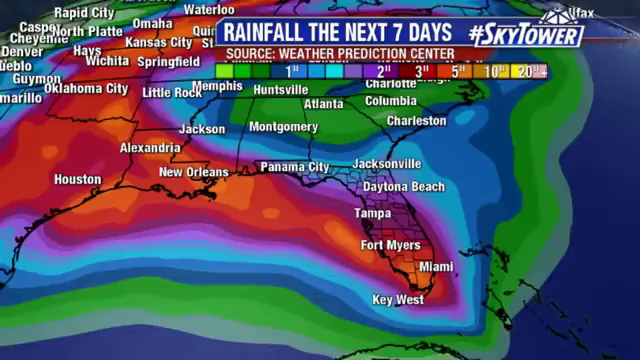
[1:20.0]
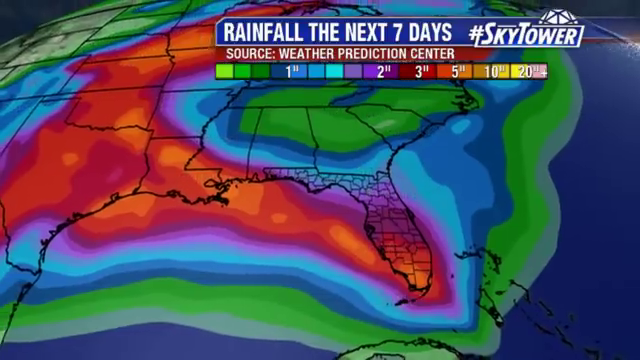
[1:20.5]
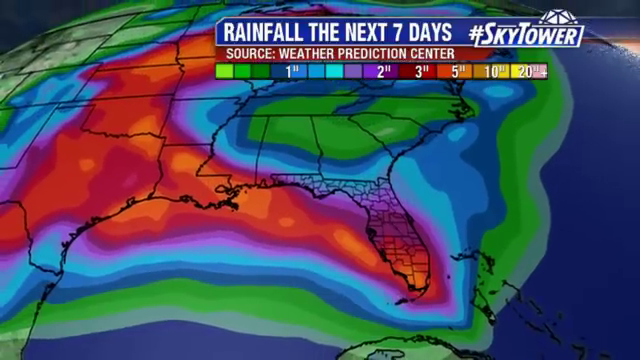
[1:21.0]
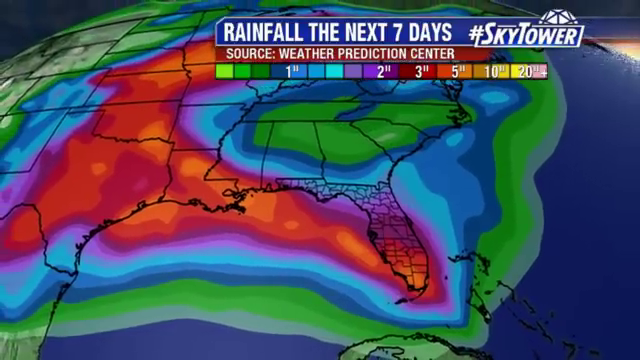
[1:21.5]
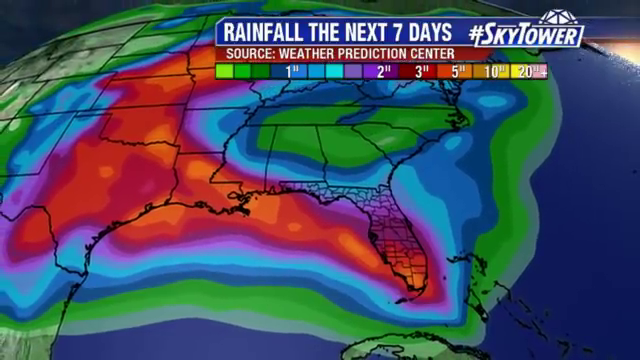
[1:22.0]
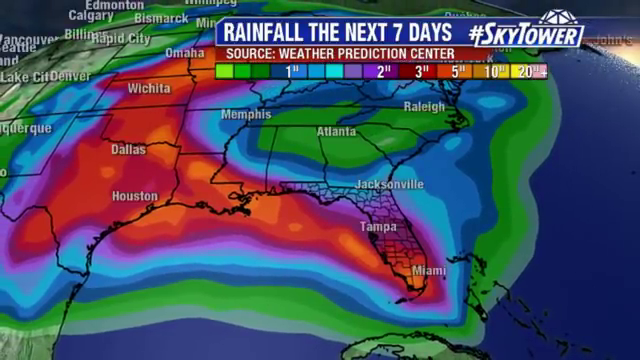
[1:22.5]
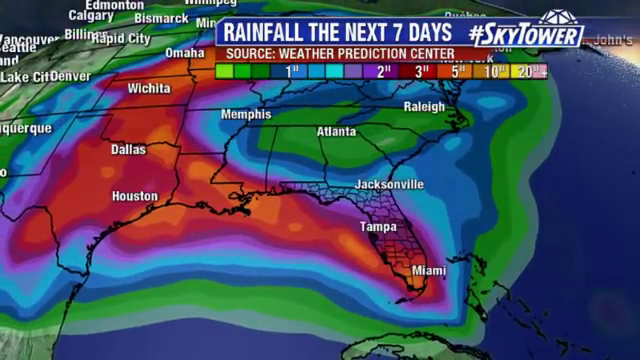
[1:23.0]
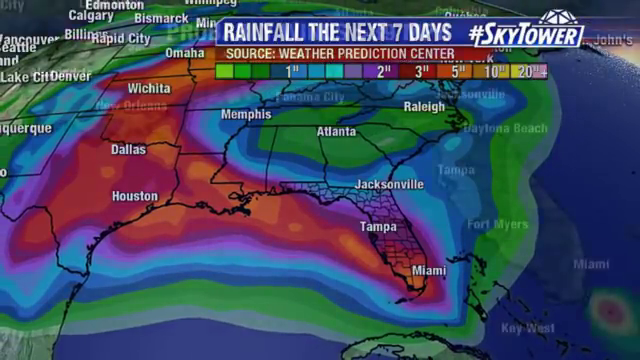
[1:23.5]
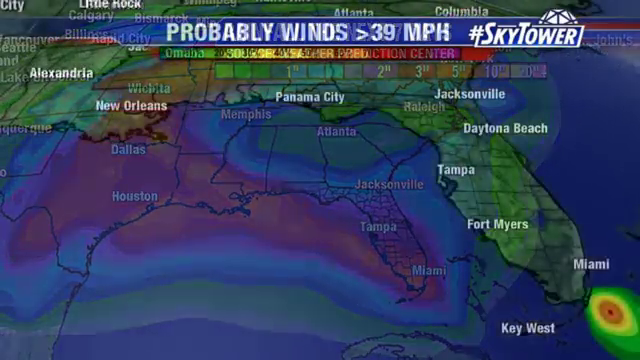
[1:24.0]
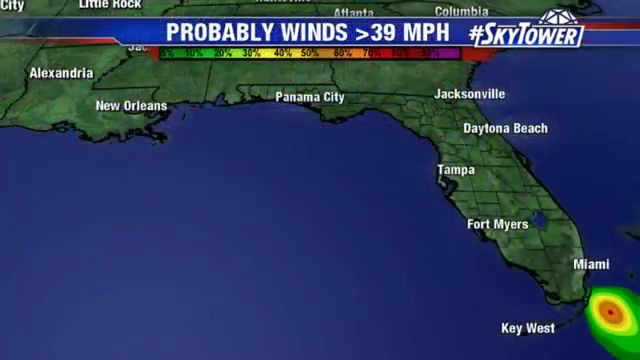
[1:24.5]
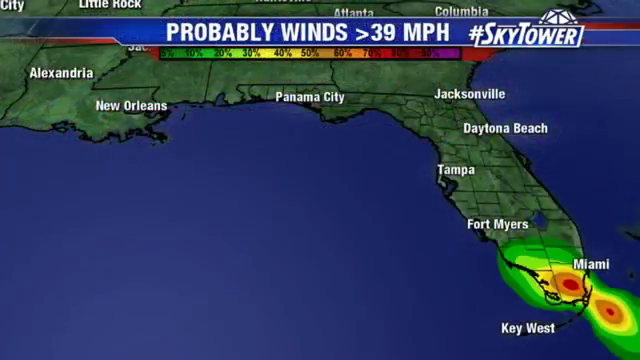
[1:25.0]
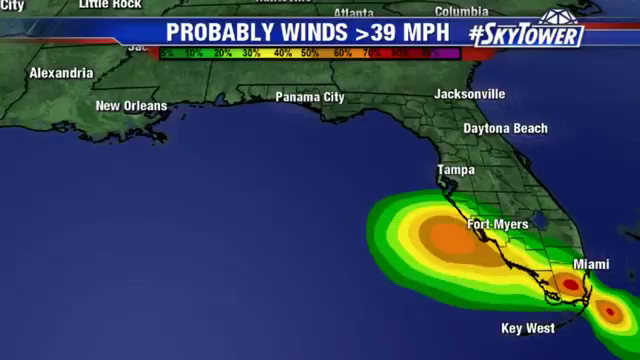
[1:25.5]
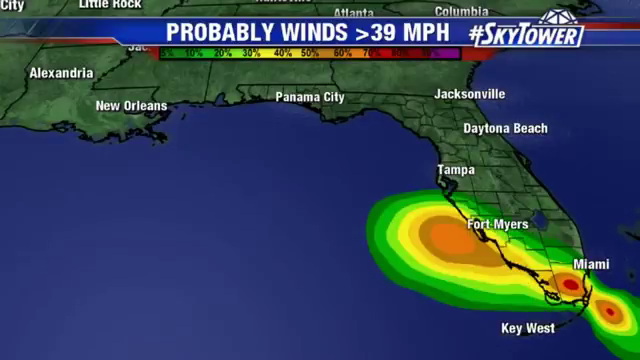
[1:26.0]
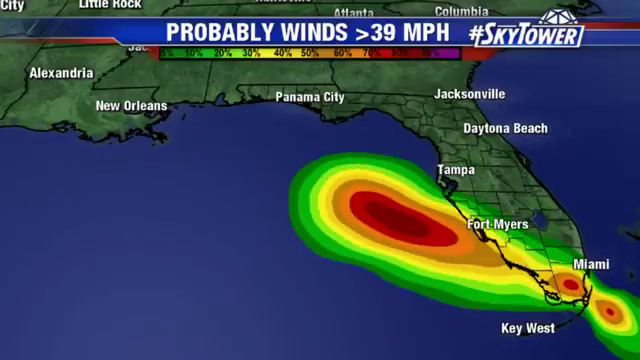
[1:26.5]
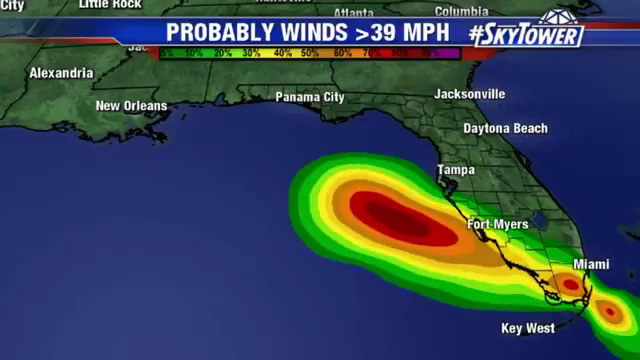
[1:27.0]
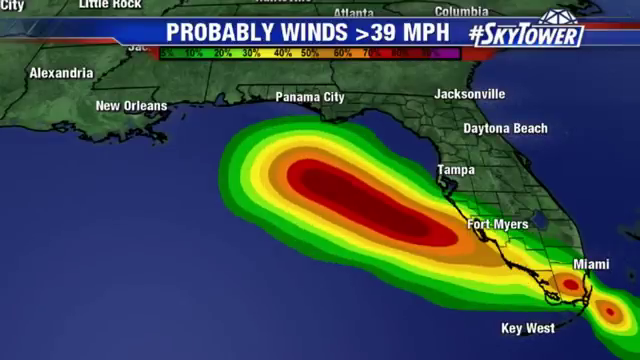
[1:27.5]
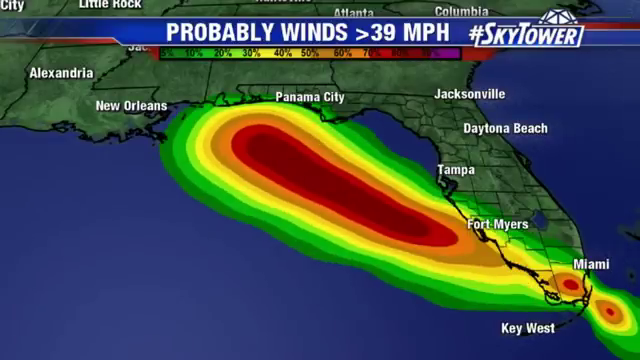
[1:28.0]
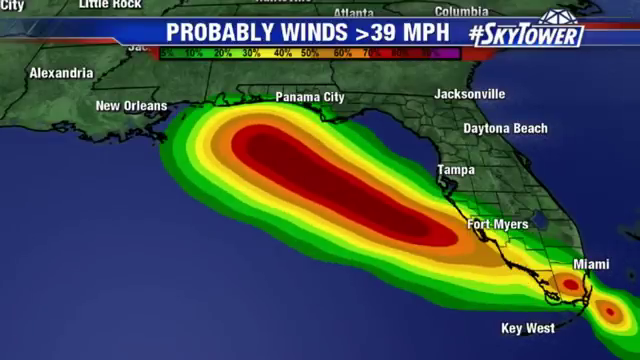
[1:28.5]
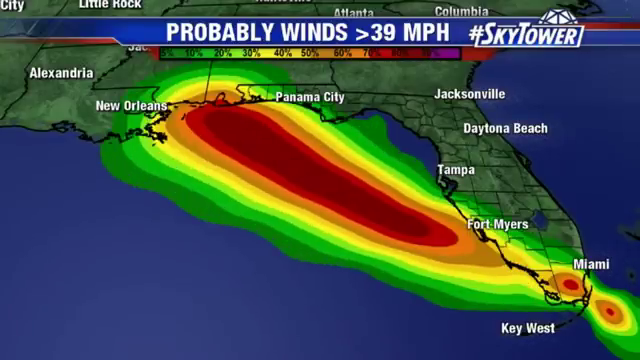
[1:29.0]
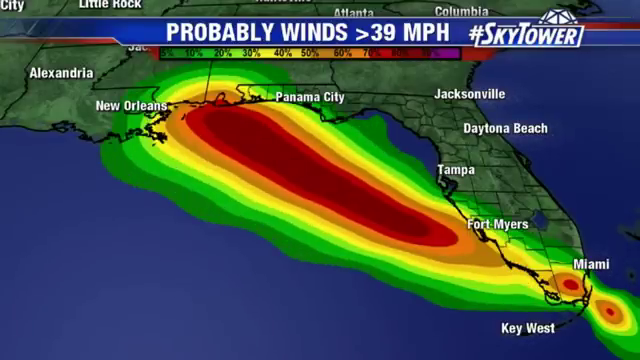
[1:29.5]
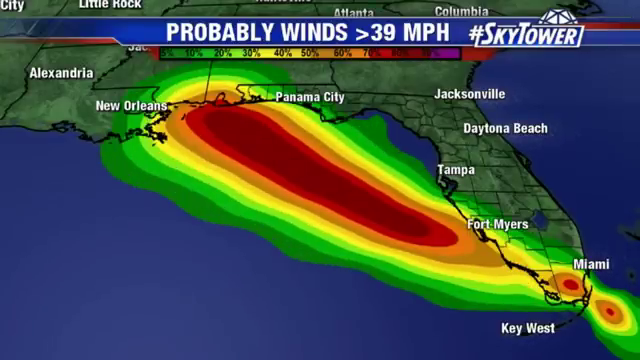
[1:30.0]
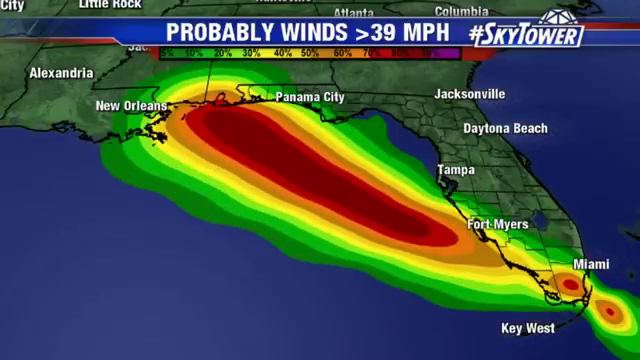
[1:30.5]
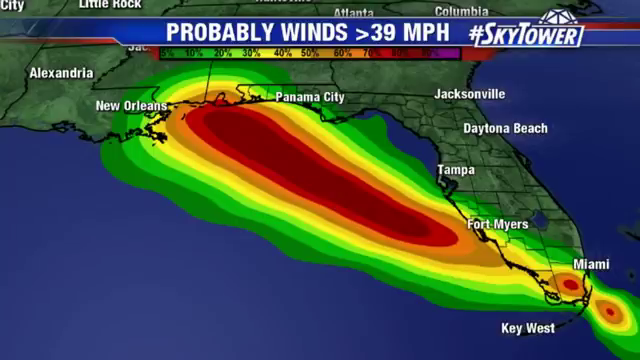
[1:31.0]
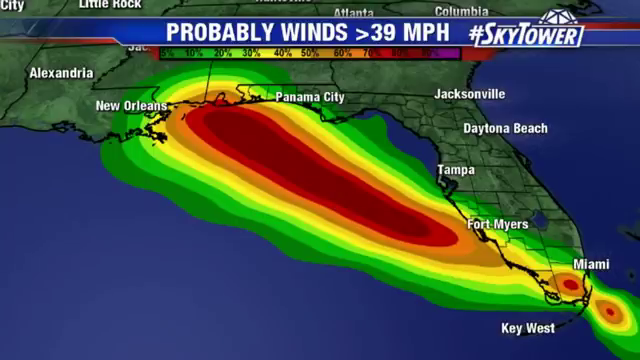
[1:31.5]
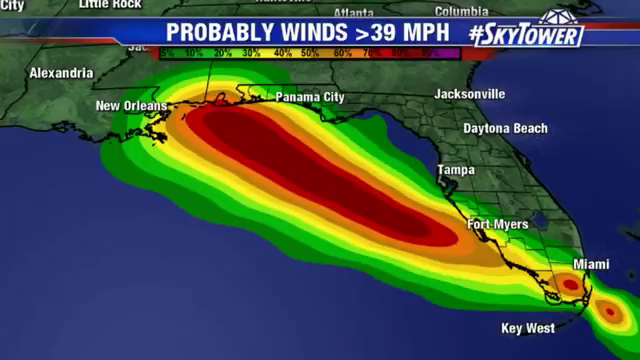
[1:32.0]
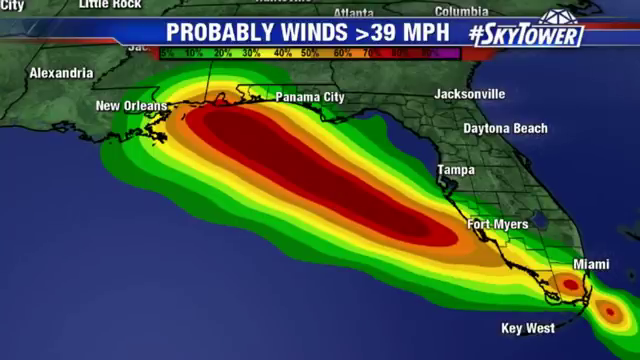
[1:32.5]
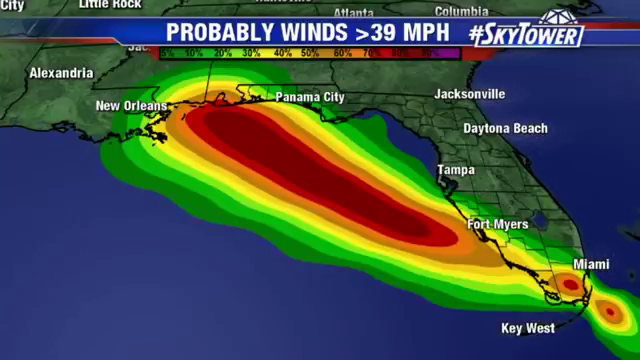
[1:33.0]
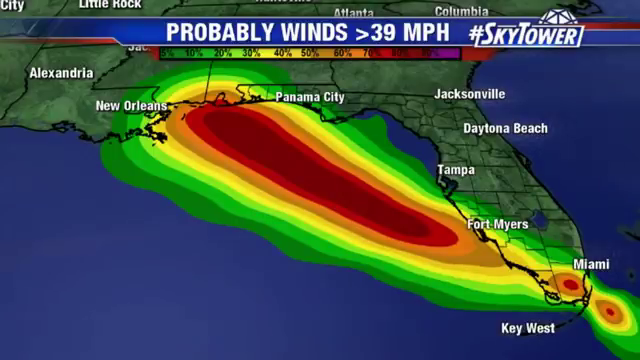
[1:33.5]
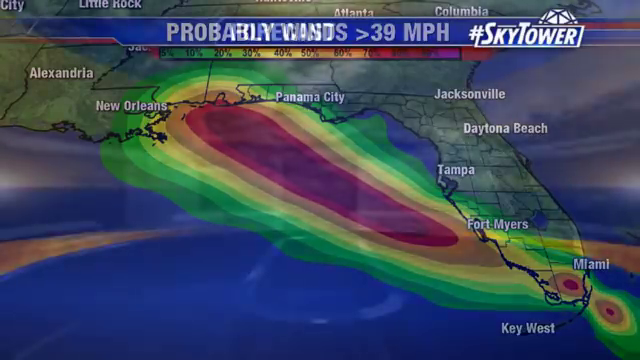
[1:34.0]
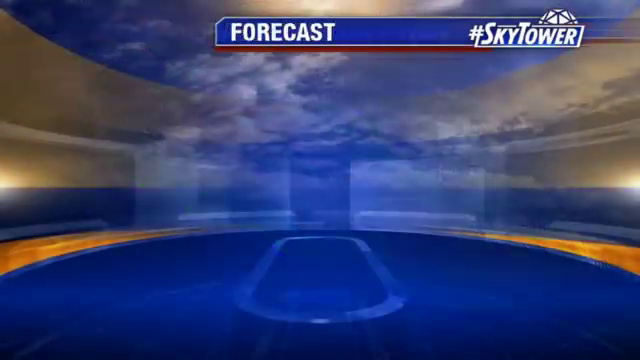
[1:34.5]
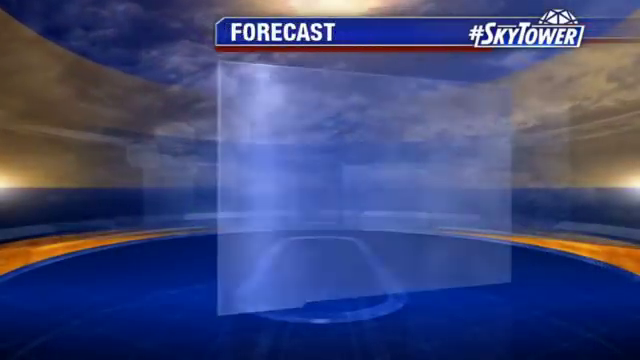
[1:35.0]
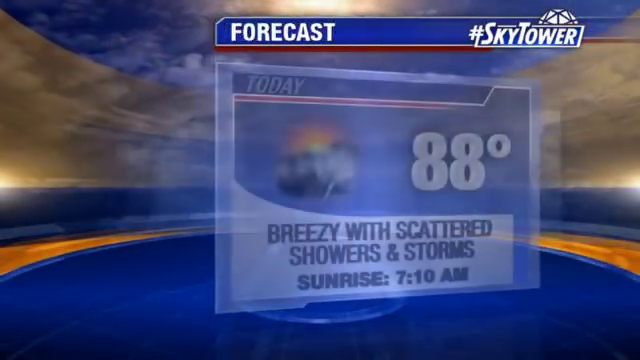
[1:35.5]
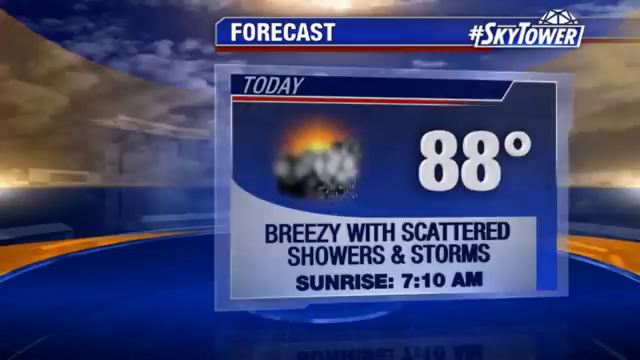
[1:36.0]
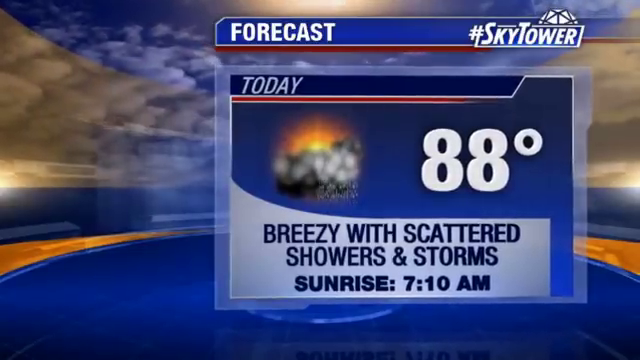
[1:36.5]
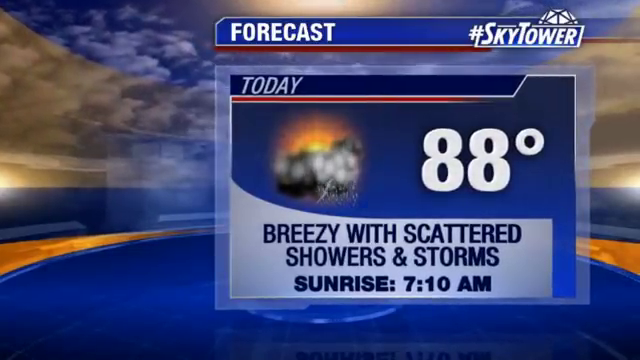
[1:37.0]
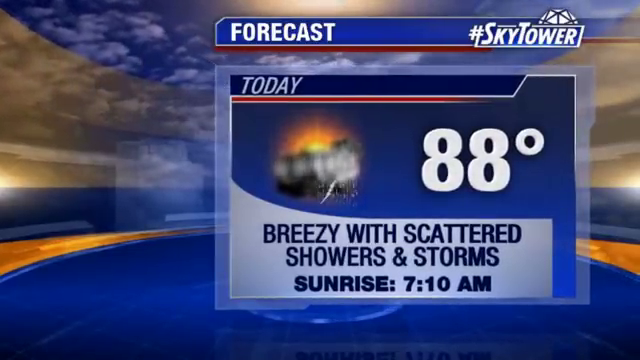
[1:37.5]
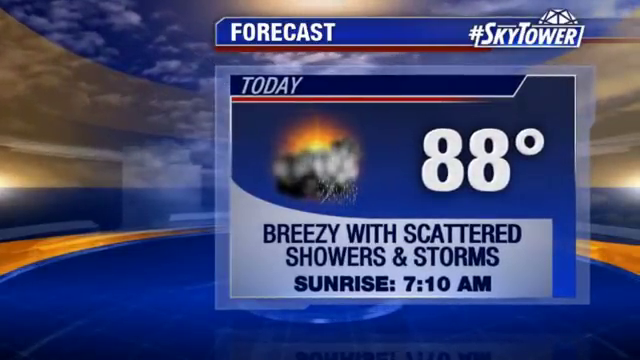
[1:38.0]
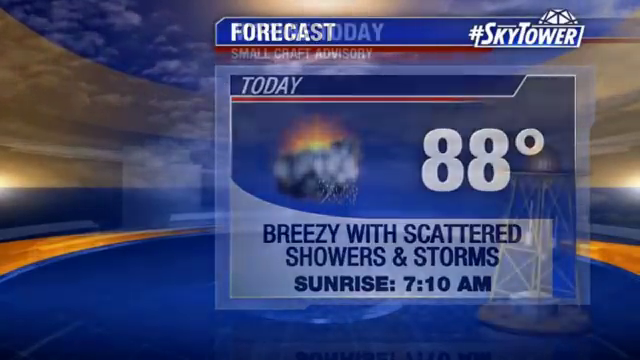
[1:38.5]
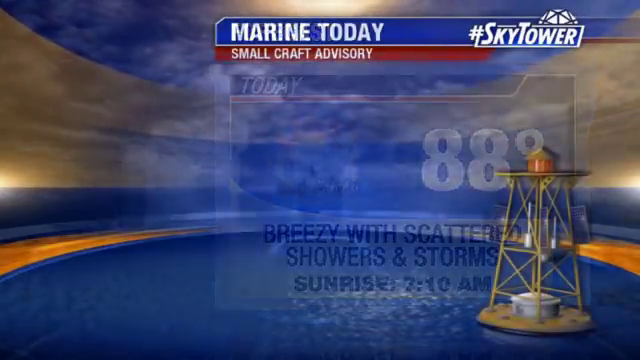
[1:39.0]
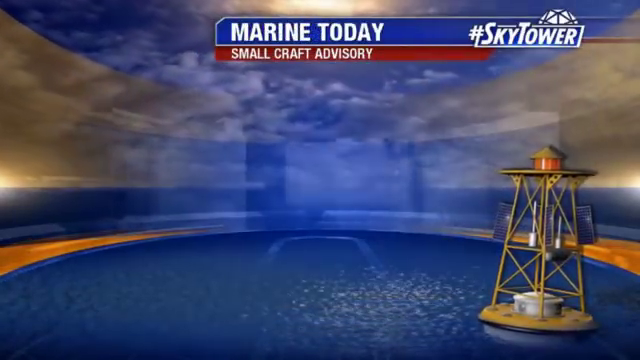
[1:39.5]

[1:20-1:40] Toward the right of the top middle of the screen is a rectangular blue banner in white font reading "rainfall the next seven days". Below it is a map of the southeast United States covering Florida, Alabama, Georgia, Mississippi, Louisiana and Texas, with many colors representing rainfall; pink, for example, represents three inches. The map then changes to a different one for probability winds, more focused on Florida. On it, a band of color comes off South Florida and heads west into the Gulf, green on the outside, then yellow and orange, and red in the center, where the dark red indicates higher wind speeds that can go over 70 miles an hour.